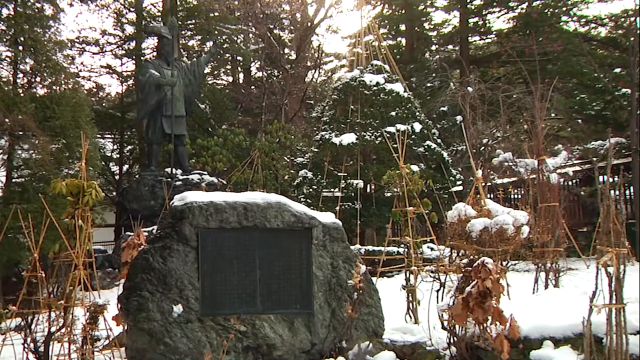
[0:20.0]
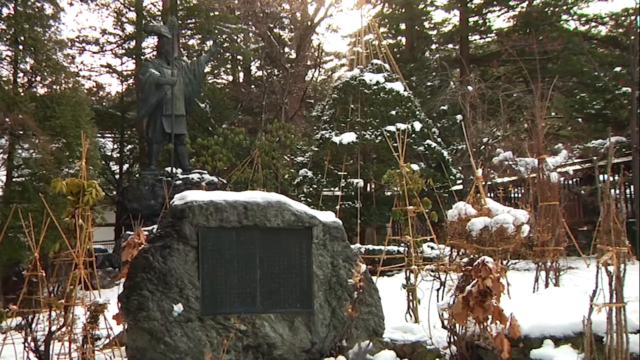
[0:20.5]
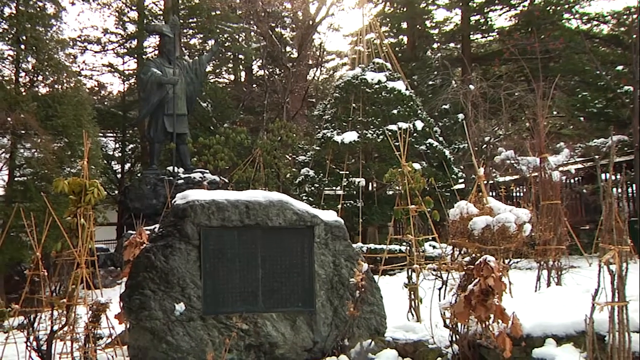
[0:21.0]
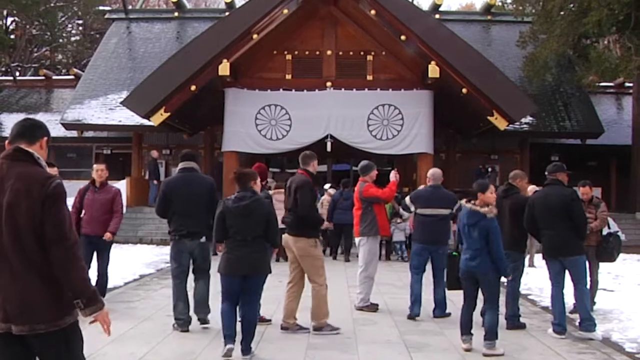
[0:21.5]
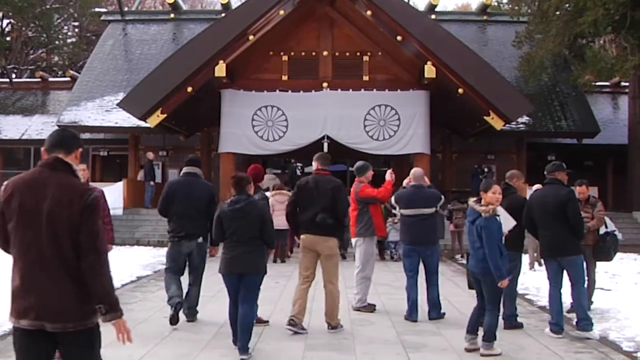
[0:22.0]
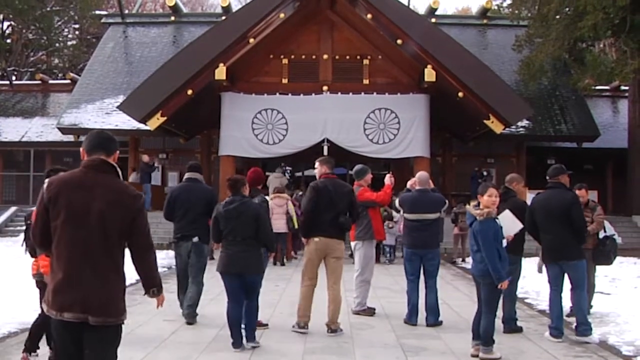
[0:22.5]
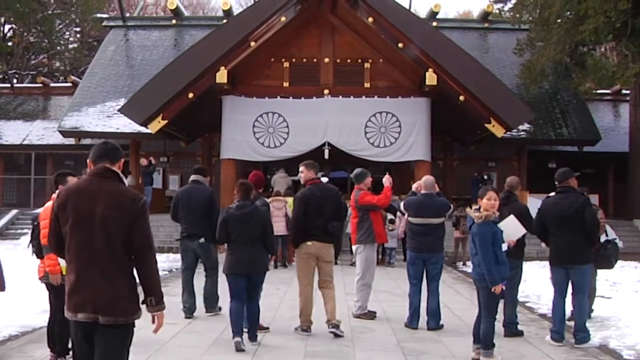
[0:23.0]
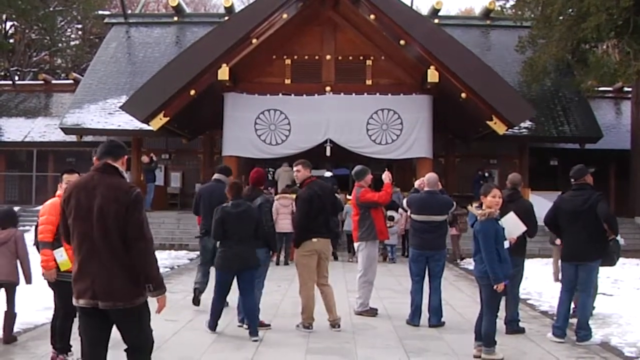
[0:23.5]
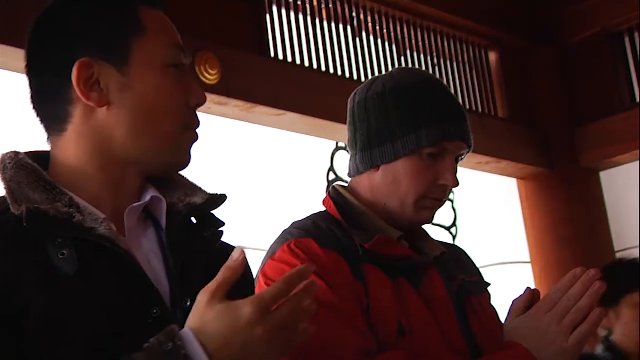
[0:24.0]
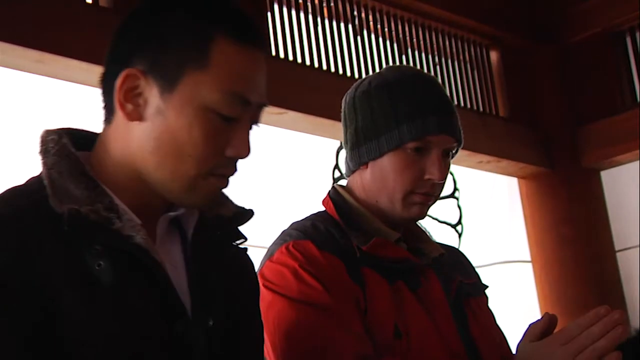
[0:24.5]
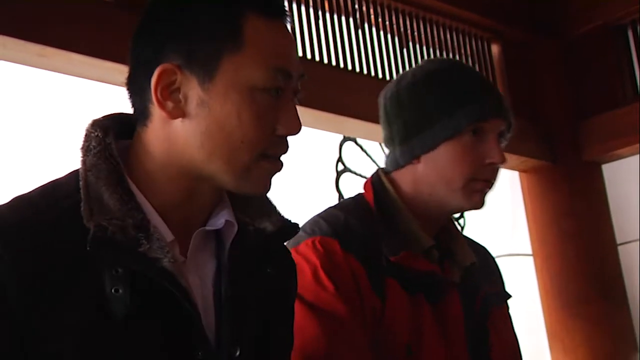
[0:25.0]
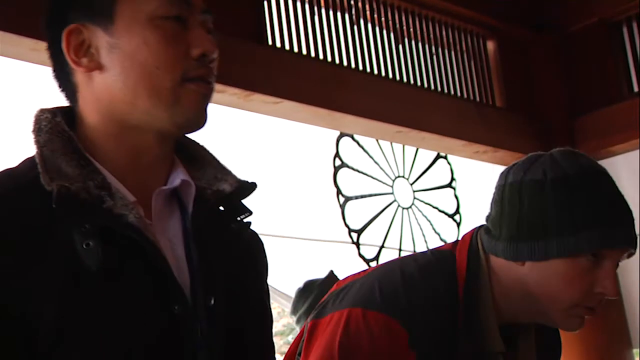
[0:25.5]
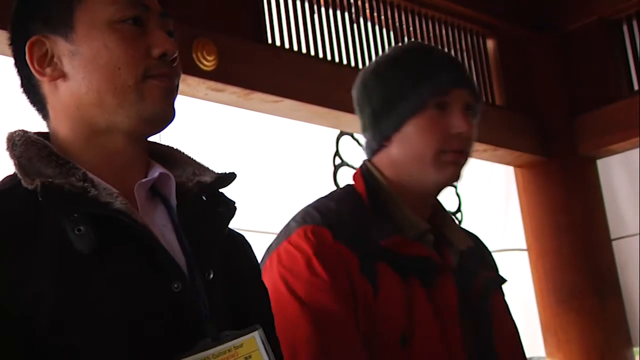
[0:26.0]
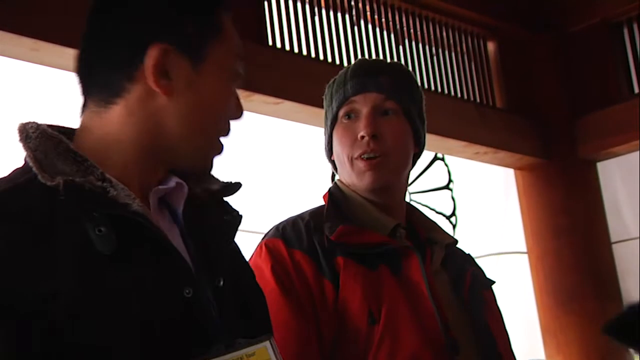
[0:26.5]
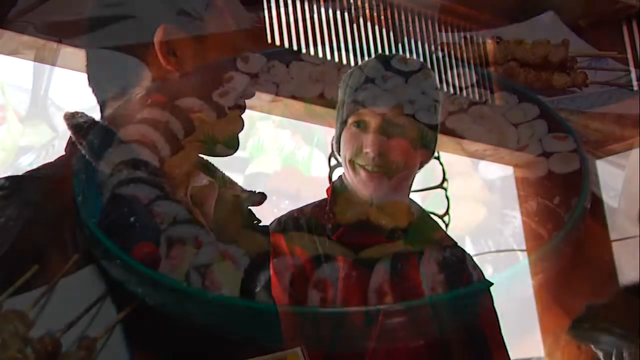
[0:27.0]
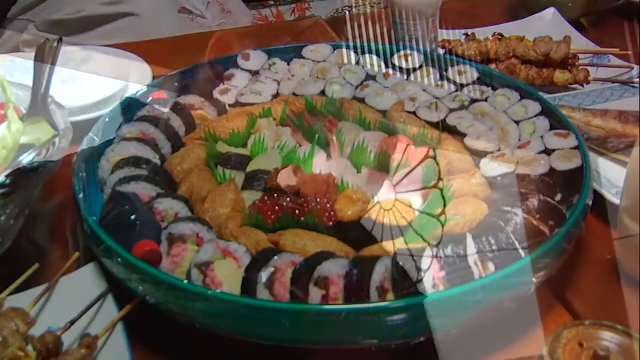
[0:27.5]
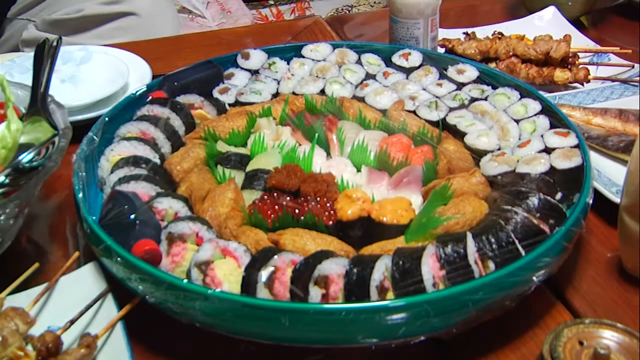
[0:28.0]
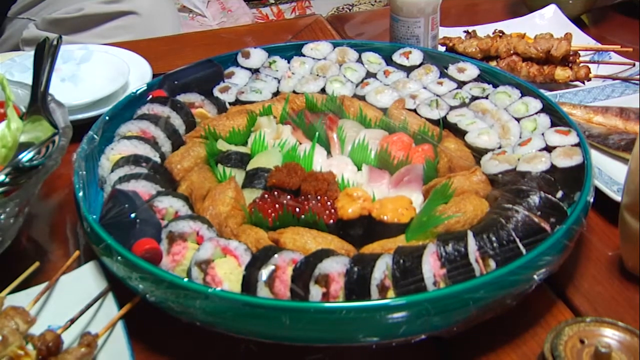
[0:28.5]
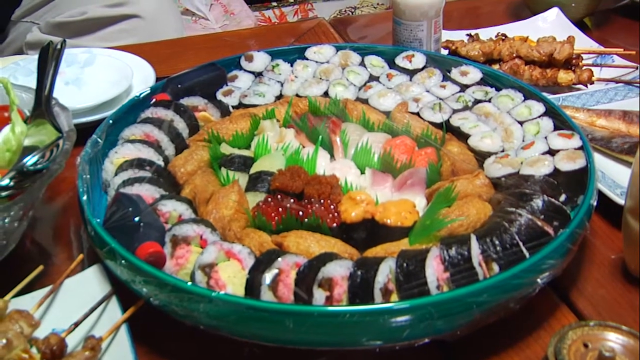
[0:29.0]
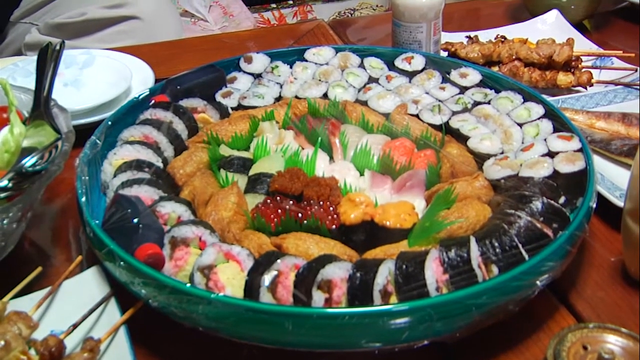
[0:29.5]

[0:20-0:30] An outdoor scene shows what look to be plant cages, possibly made of wood. A big boulder has something like a tablet imprinted into it that almost looks like a solar panel. There seems to be a statue in the background holding a spear, with a very dark gray metallic look. The view returns to the very oriental-looking building, which has a white banner in front of it with two drawings on either side that look like women. Several people are standing in front of the building and walking around, and there is snow on the ground. The scene then moves, presumably inside the building, where two people, one Asian and one seemingly European, are talking to each other and bowing. A shot shows a bowl full of sushi and some items on sticks on a table.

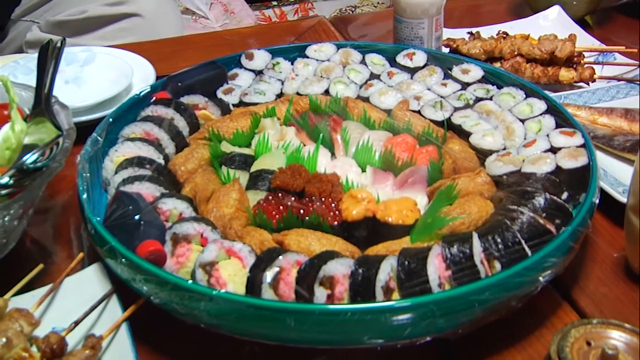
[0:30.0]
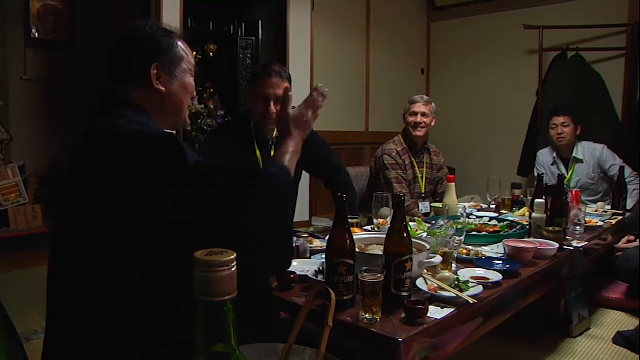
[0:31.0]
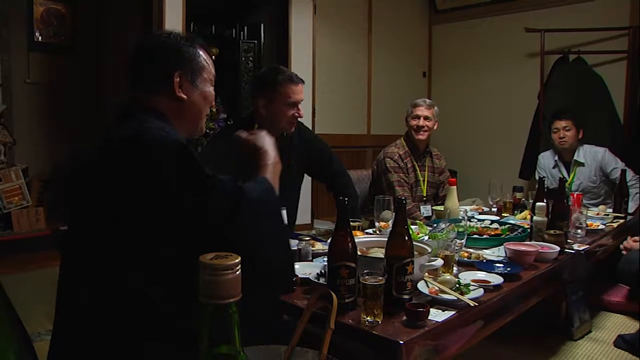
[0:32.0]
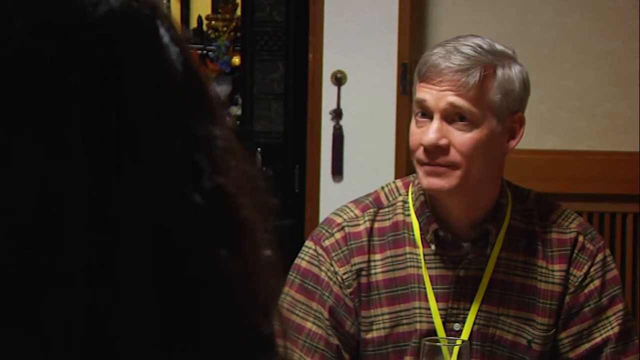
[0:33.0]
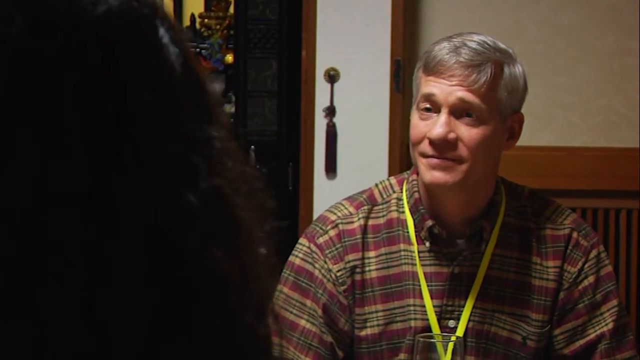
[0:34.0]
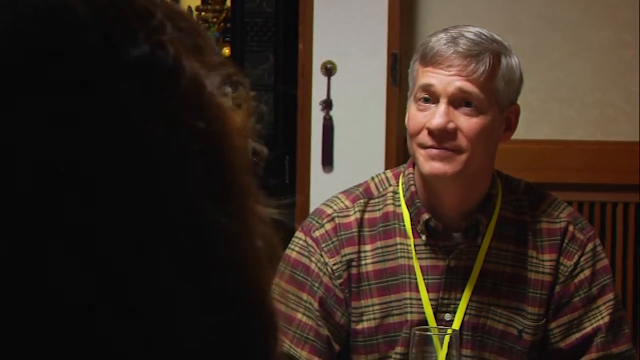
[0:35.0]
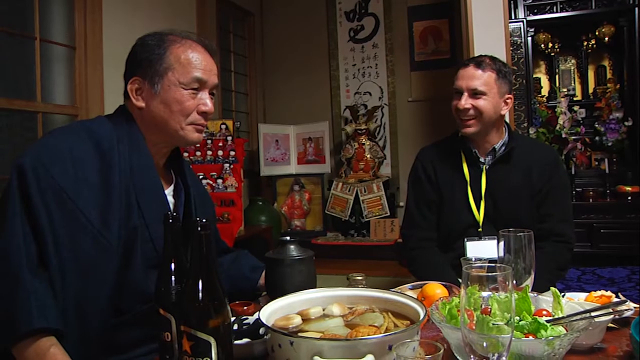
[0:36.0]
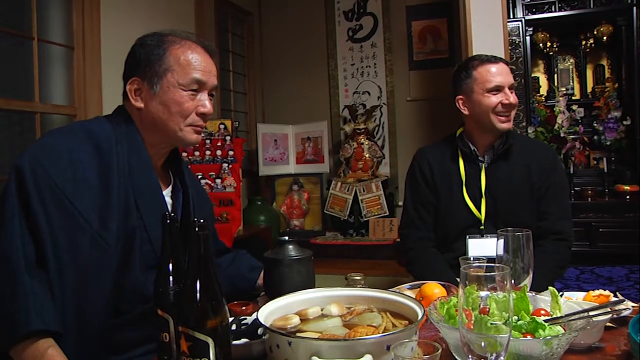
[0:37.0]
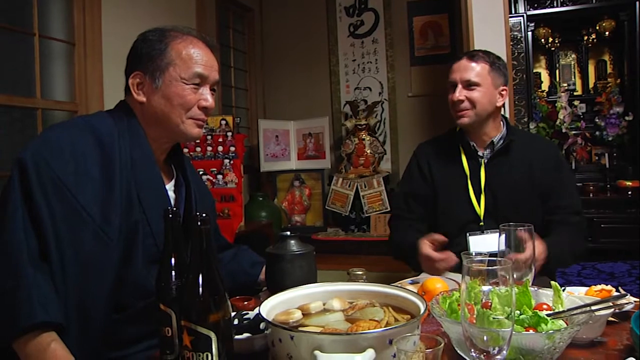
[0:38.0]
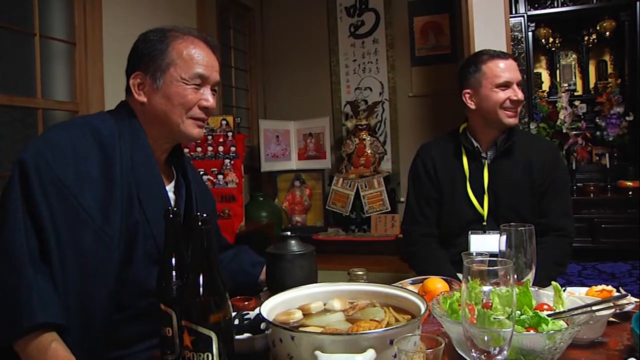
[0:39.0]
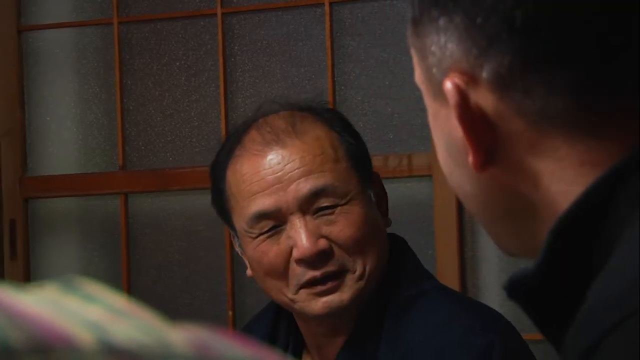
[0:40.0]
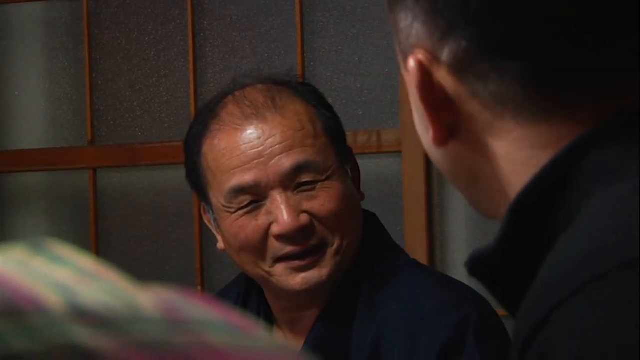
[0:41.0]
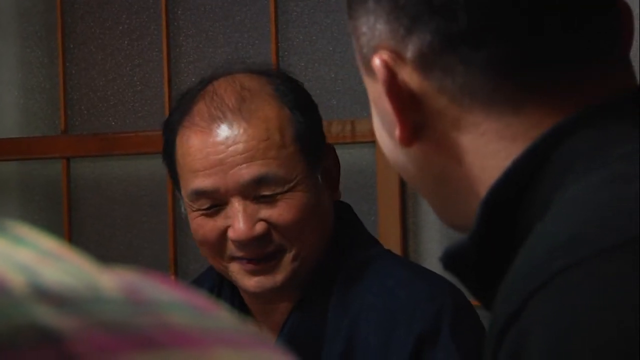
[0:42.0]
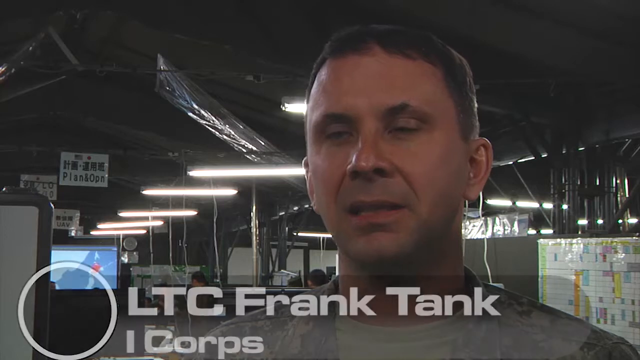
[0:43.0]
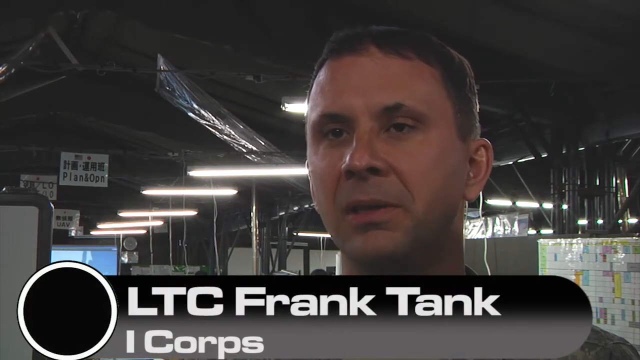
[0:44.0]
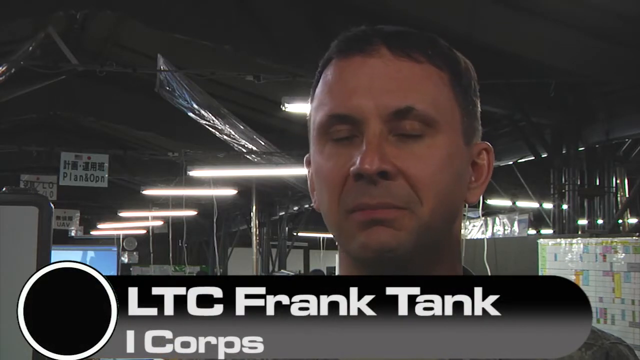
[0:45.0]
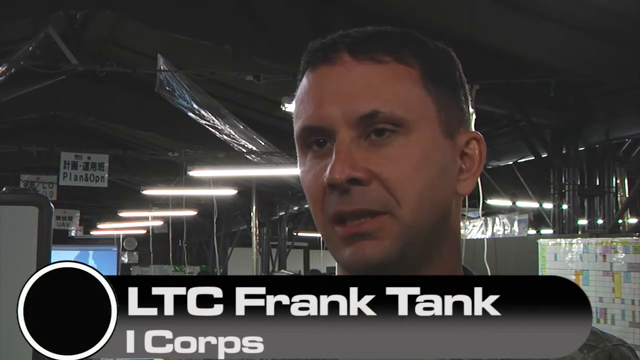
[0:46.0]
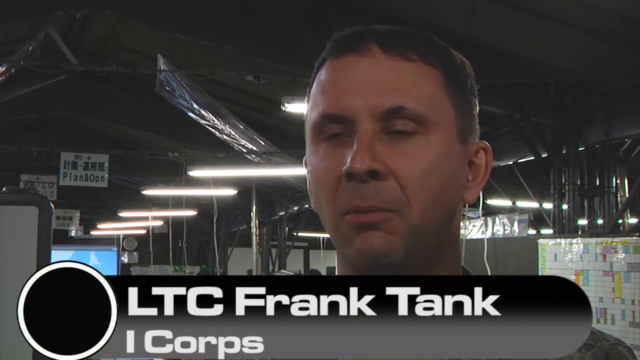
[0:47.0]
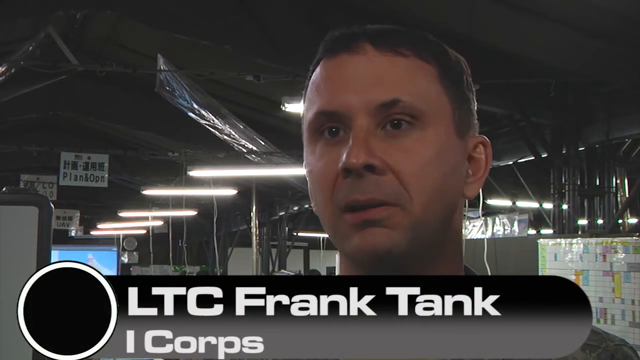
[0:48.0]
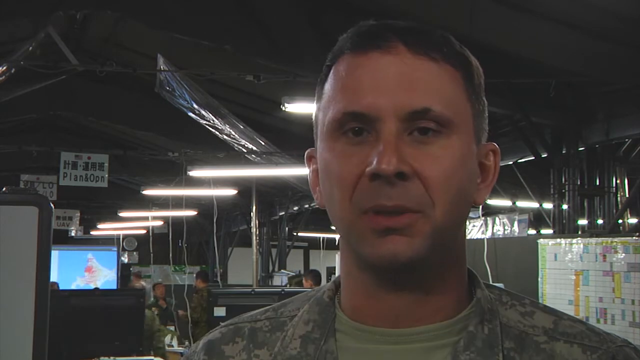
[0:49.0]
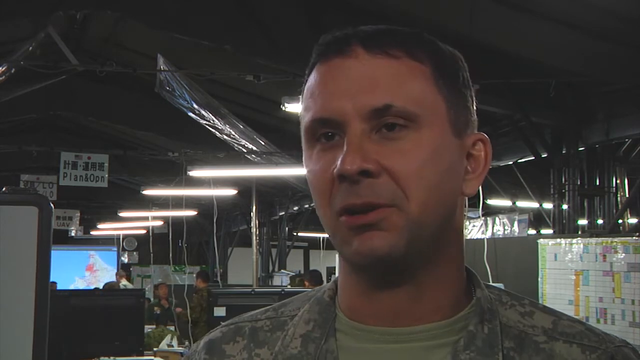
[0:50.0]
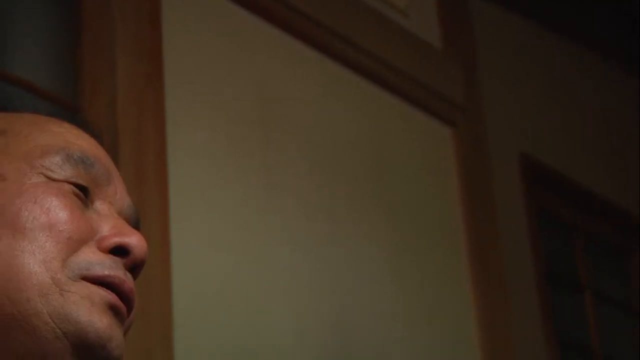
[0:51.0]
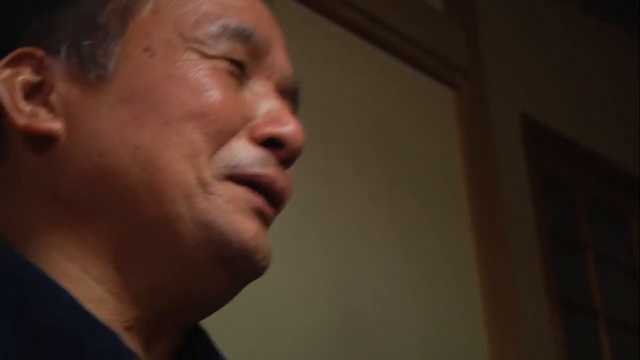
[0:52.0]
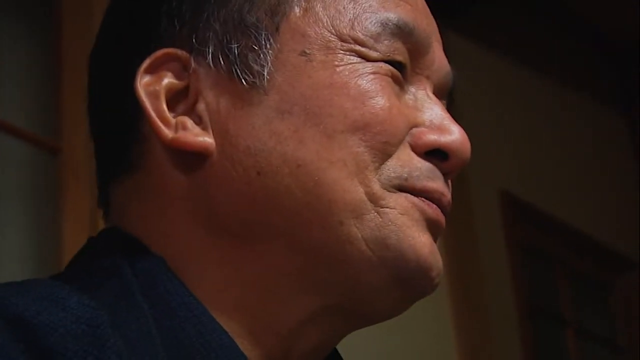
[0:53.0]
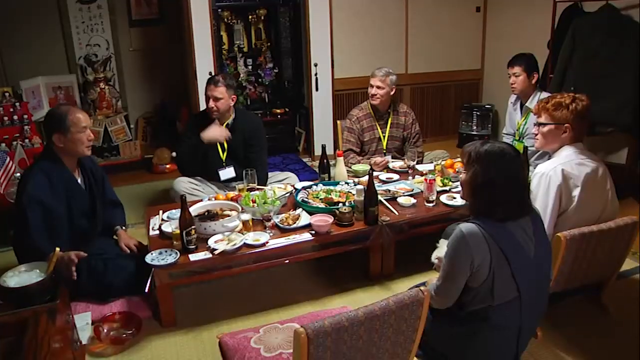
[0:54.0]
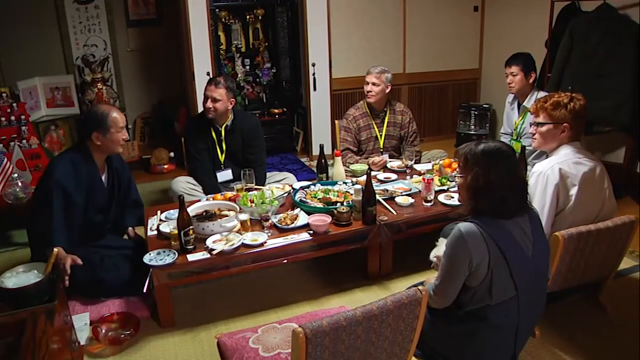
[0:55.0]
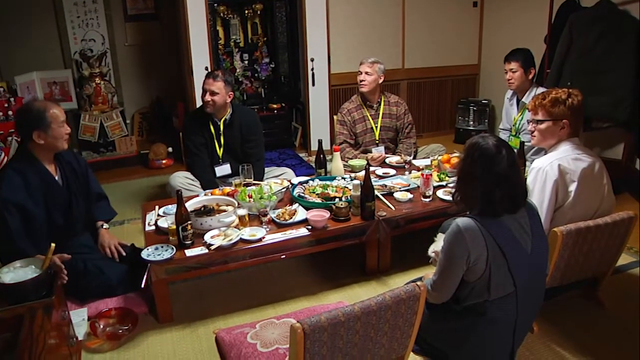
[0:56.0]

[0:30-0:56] The bowl full of sushi is shown, then the view moves in to what seems to be a small dinner table with what seem to be two European-American men, maybe a Hispanic man, and an Asian man. There are bottles of sake, different foods and bowls on the table. The Asian man seems to be wearing a black kimono and is pointing and talking. The perspective changes to one of the white men, who is listening intently to the others, and discussion goes around the table. A new scene has the same border at the bottom, reading "LTC Frank Tank"; he is a white man with short brunette hair, talking. There seem to be things on the walls in the background that cannot be read. The view returns to the dinner table with the people eating and talking. There appear to be more people now, seemingly two women who have joined on the right side, for a total of six people in the picture.